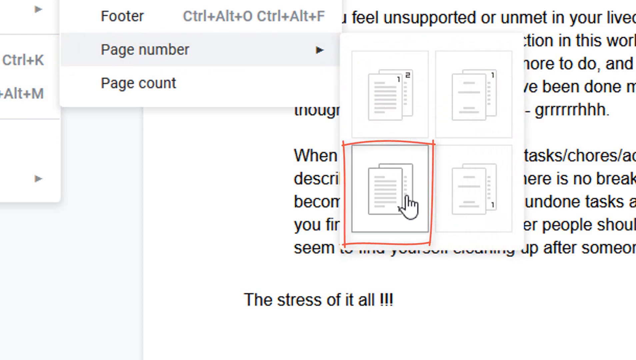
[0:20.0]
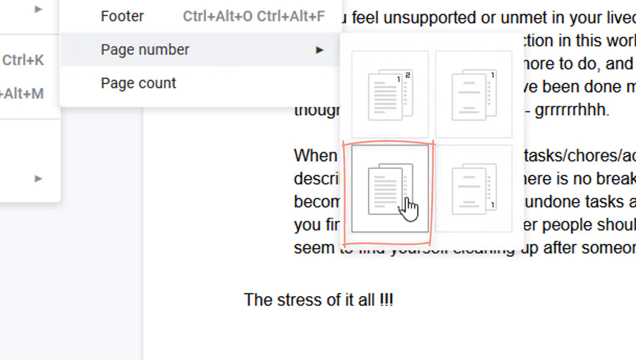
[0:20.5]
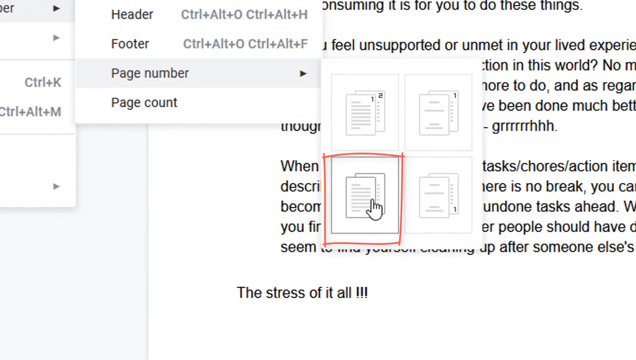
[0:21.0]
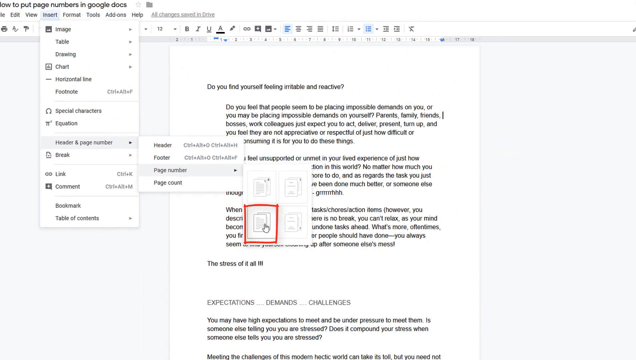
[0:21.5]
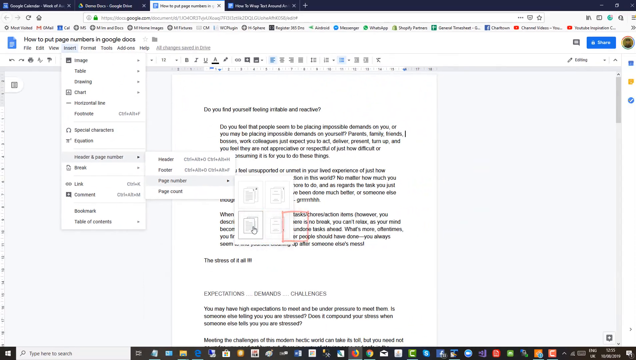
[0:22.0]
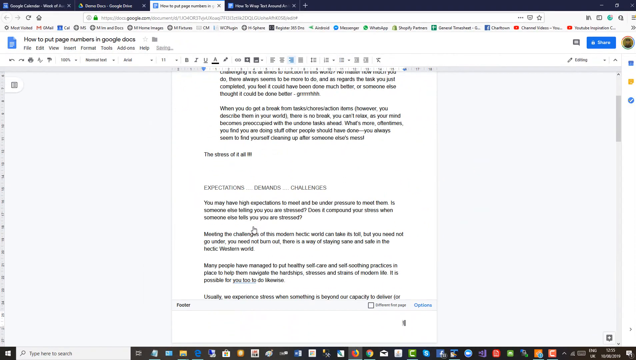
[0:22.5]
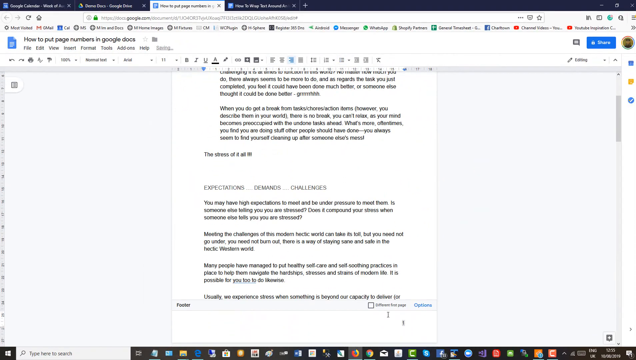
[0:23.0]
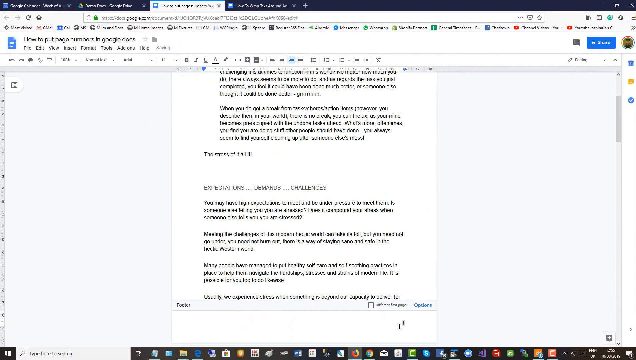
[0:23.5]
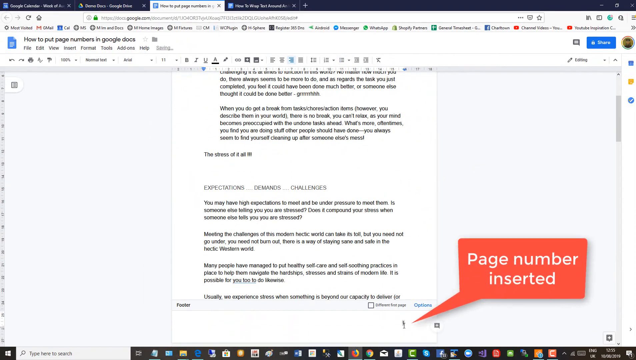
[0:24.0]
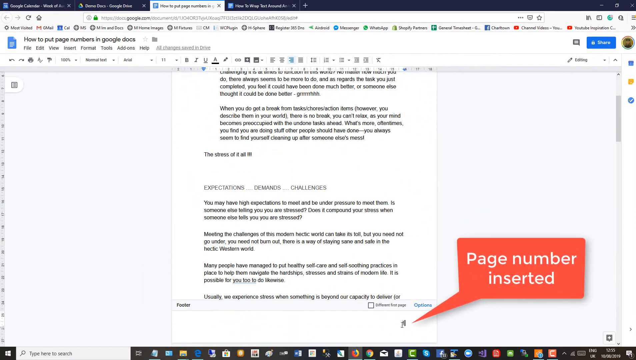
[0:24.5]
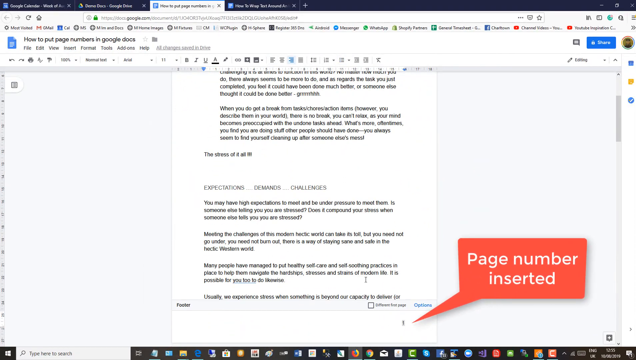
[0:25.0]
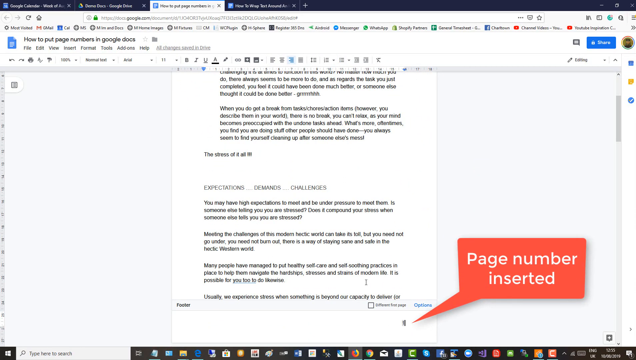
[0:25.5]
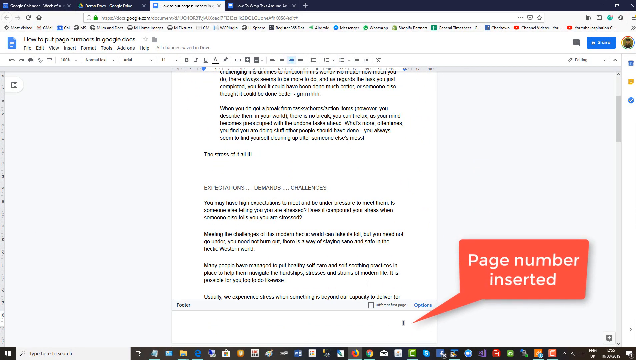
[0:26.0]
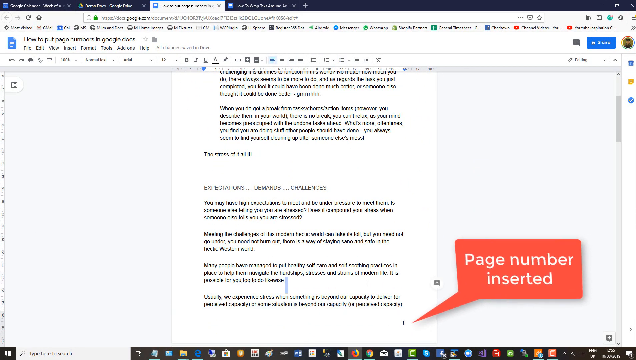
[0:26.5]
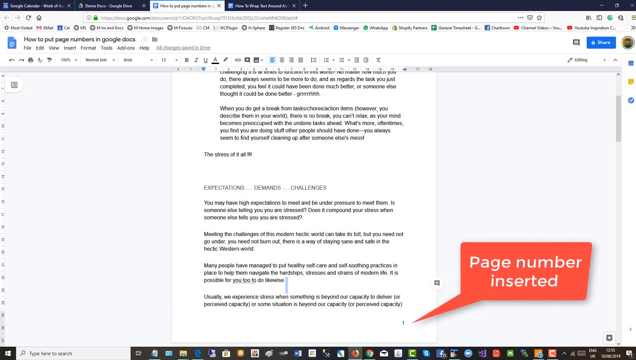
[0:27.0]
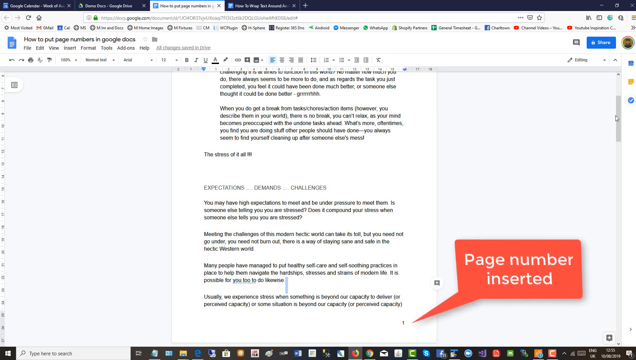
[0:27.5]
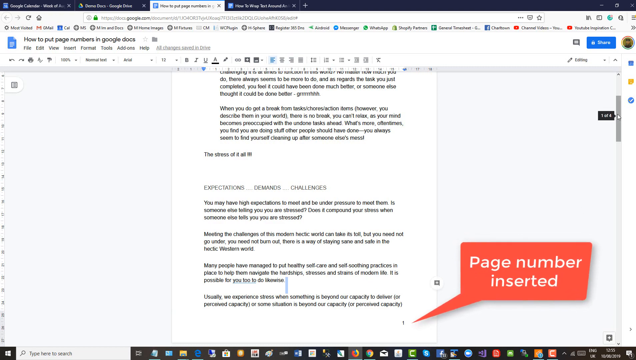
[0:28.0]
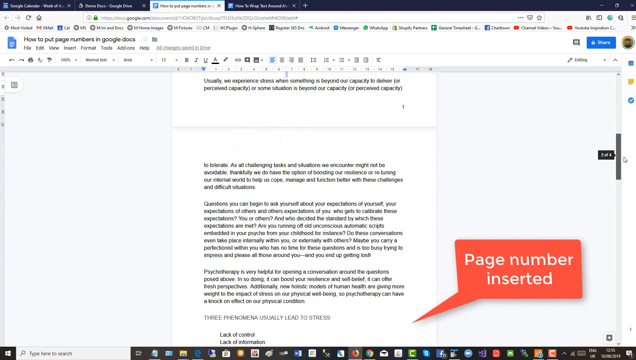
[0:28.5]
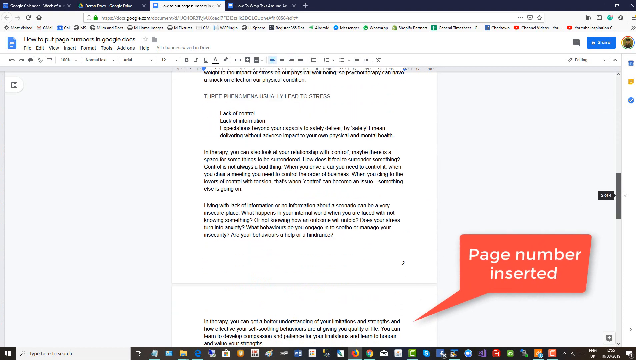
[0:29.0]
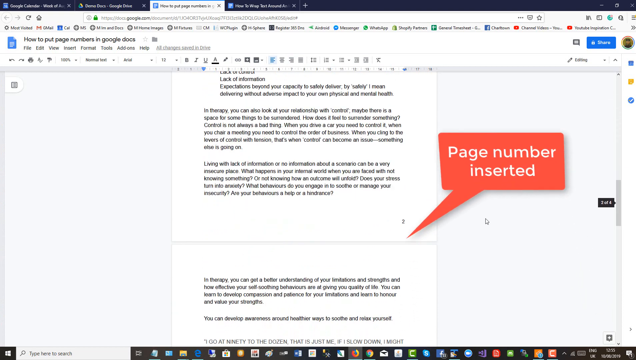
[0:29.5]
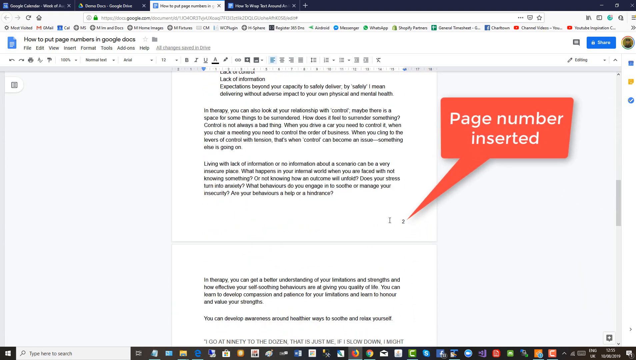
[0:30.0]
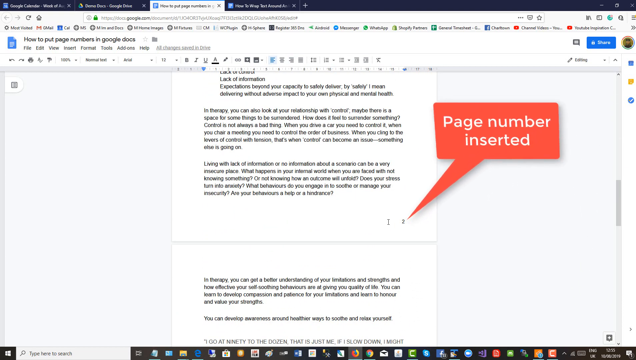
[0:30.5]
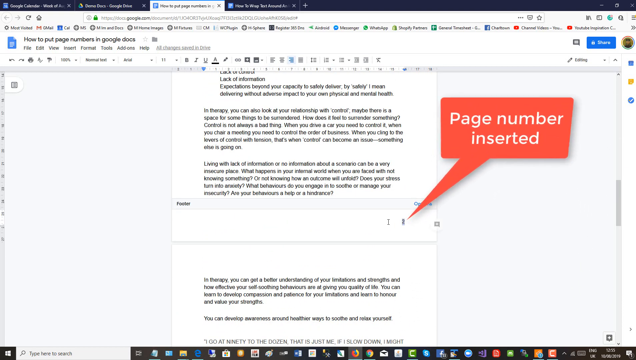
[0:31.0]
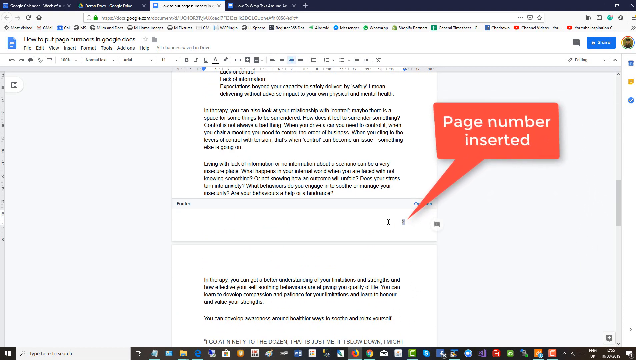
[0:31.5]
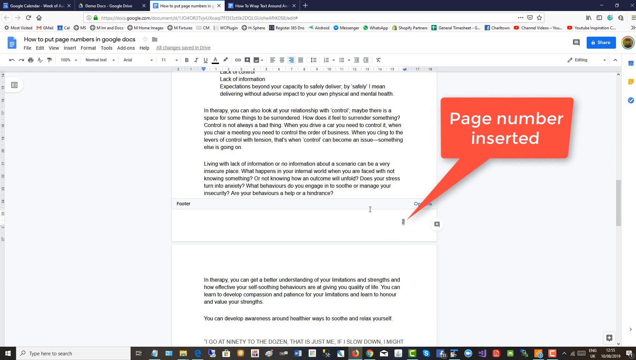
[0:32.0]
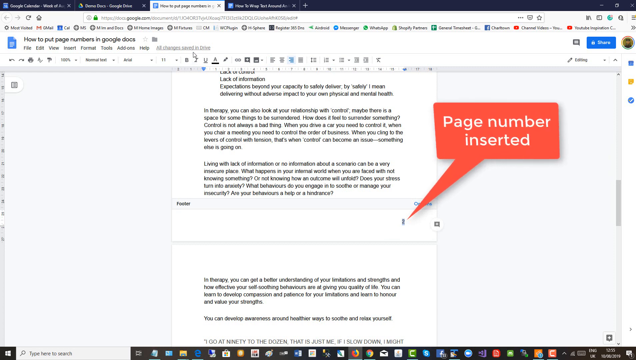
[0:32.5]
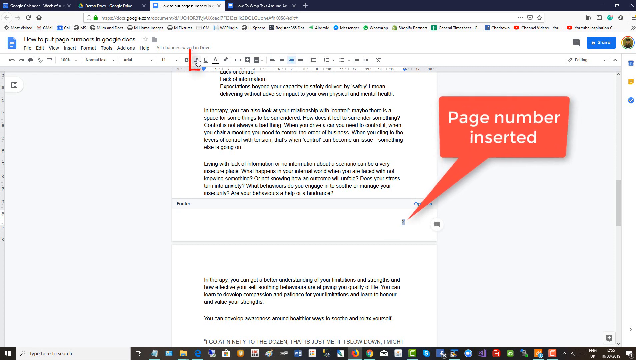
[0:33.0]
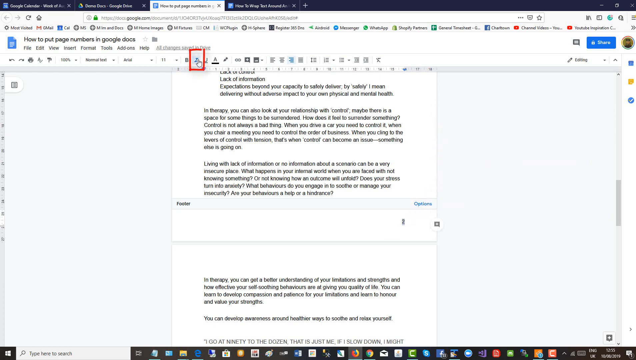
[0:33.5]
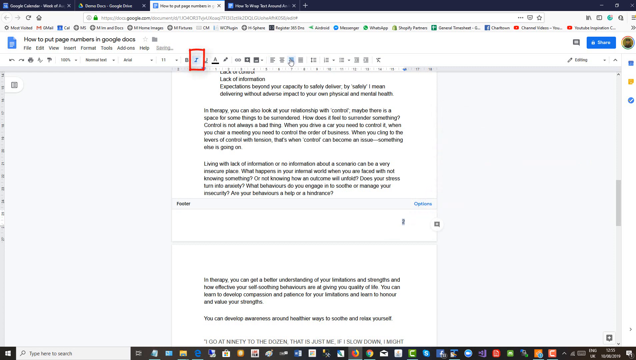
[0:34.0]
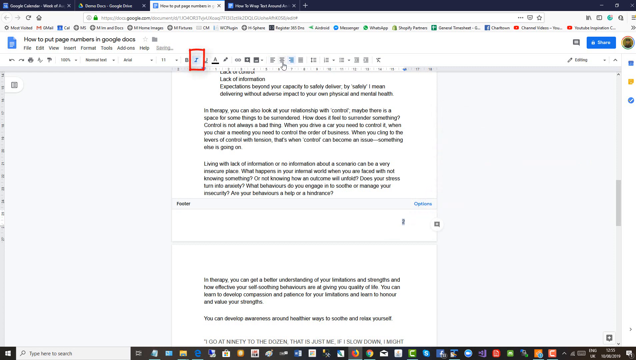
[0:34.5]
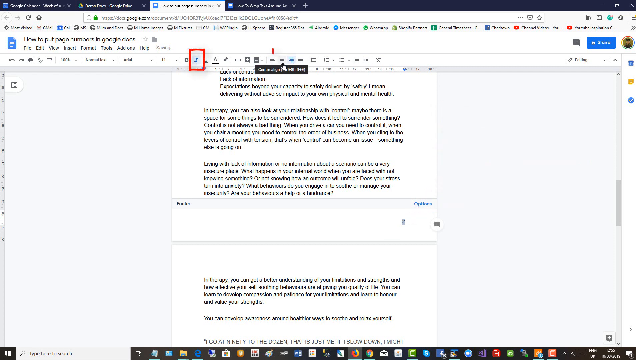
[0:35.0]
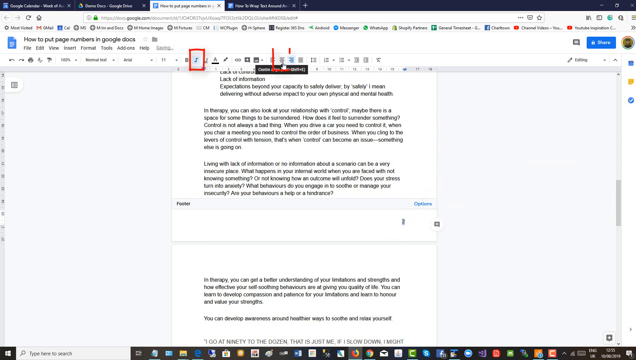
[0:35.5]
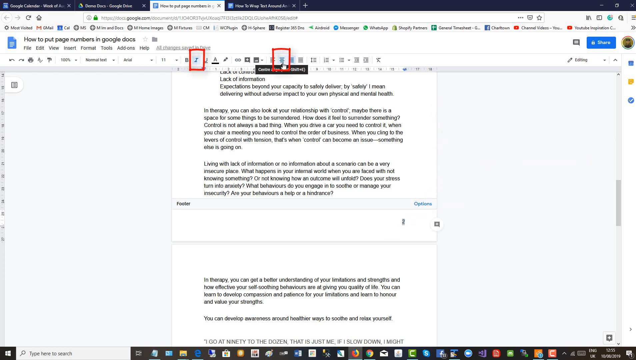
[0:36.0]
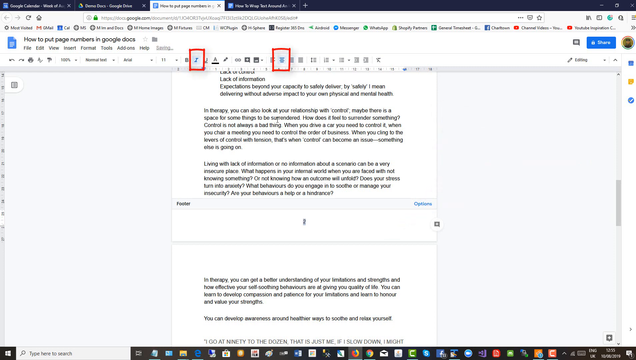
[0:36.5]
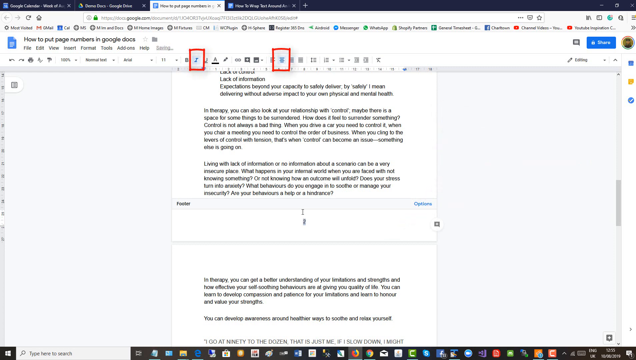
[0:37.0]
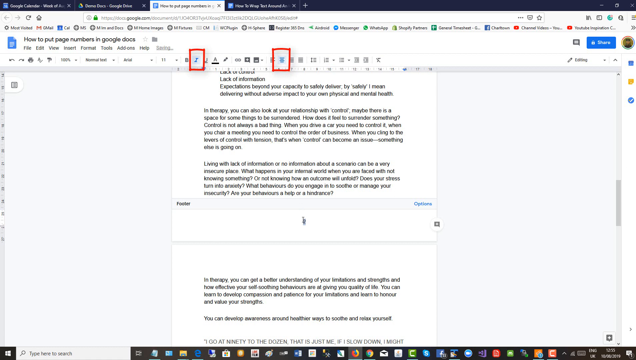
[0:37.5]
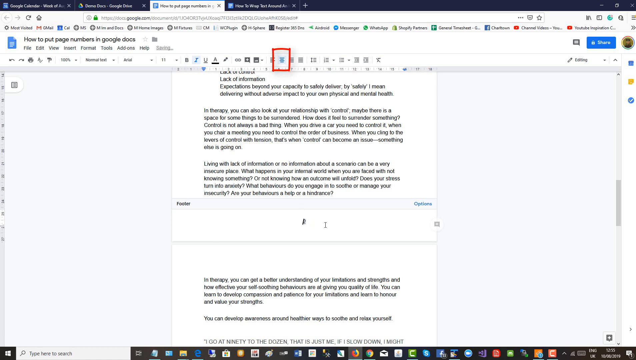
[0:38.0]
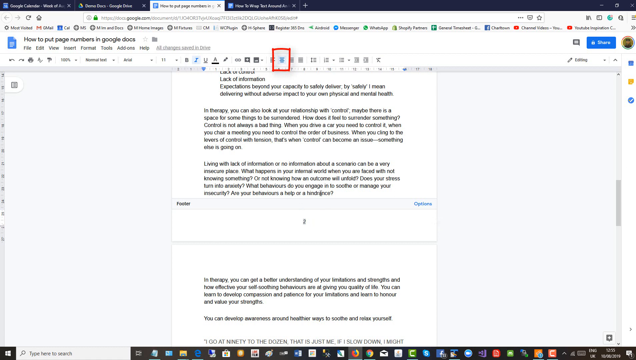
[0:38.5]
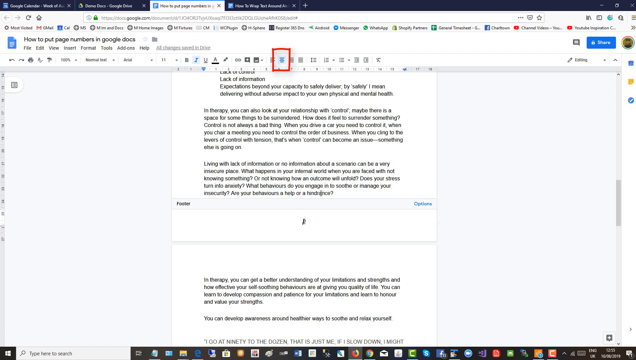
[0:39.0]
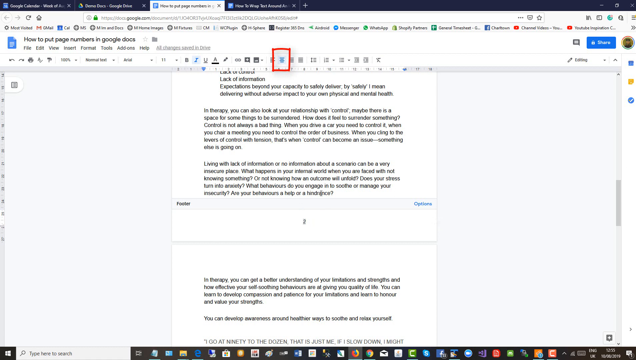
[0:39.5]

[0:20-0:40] The person chooses the number 3 option for the page number, which places it at the bottom right of the page. The person then scrolls through the document to check that all the pages have the page number in the bottom right corner. Next, the person goes to an alignment option and chooses centered alignment, aligning the numbers so they sit at the center of the bottom of the page. Once satisfied with the placement of the page number, the person continues checking that the page number is correct.